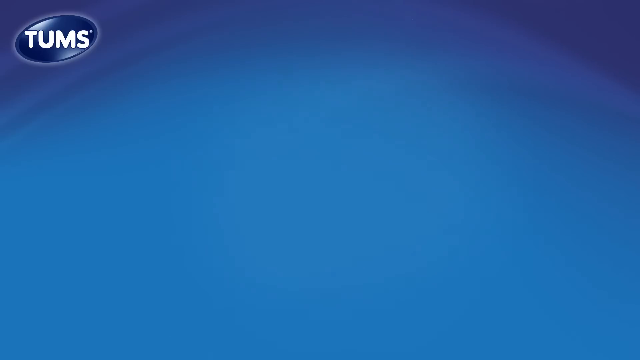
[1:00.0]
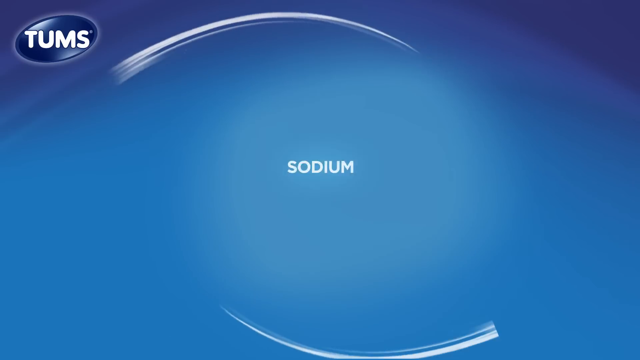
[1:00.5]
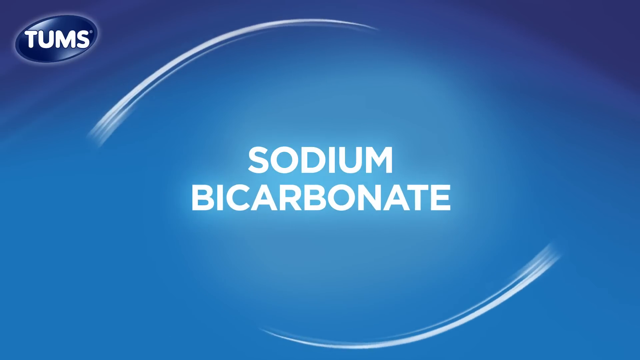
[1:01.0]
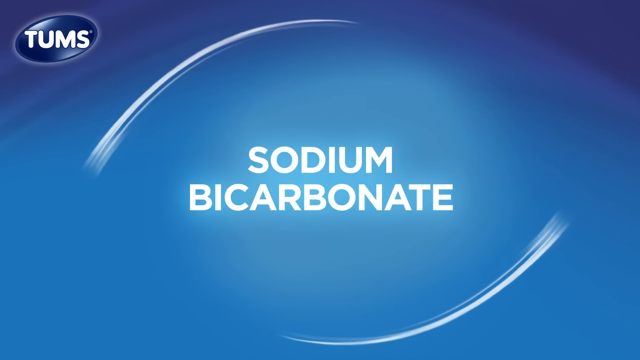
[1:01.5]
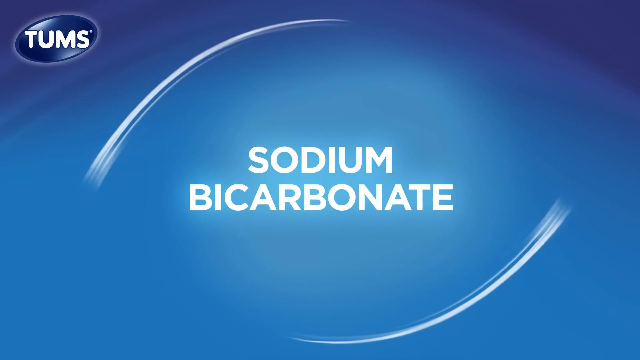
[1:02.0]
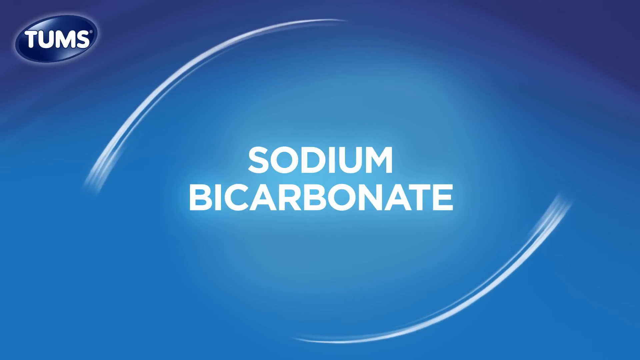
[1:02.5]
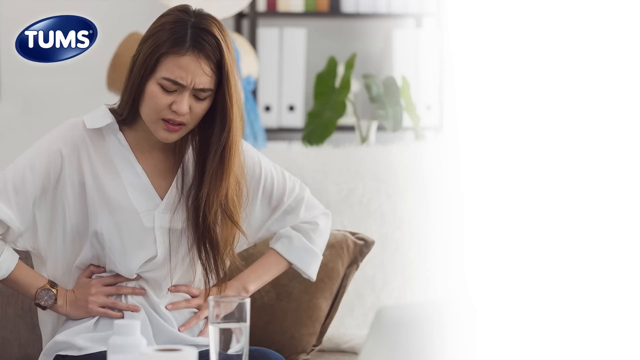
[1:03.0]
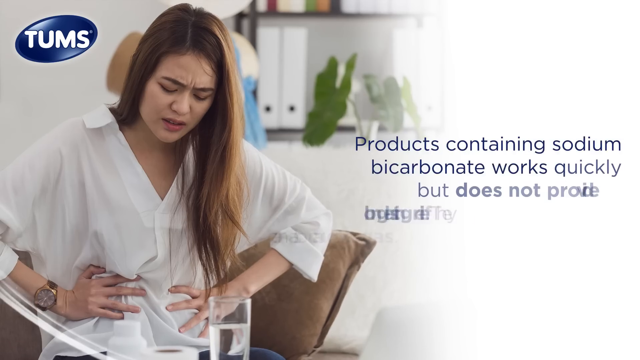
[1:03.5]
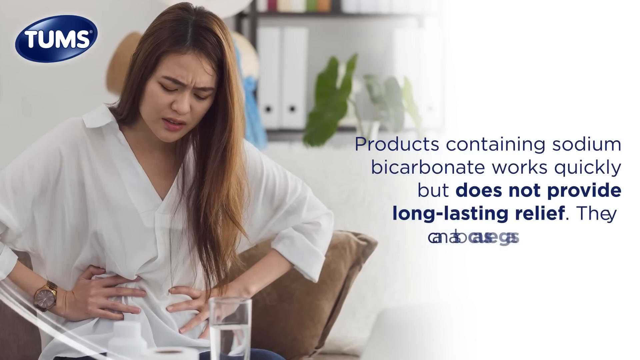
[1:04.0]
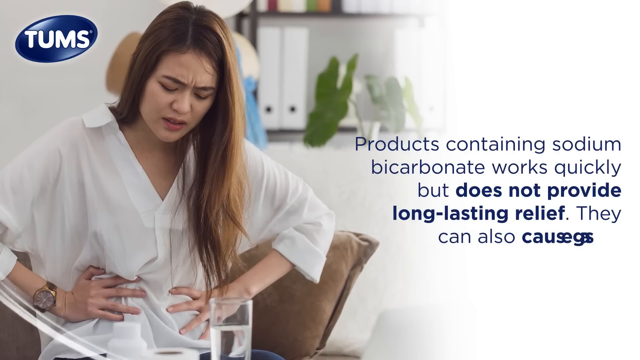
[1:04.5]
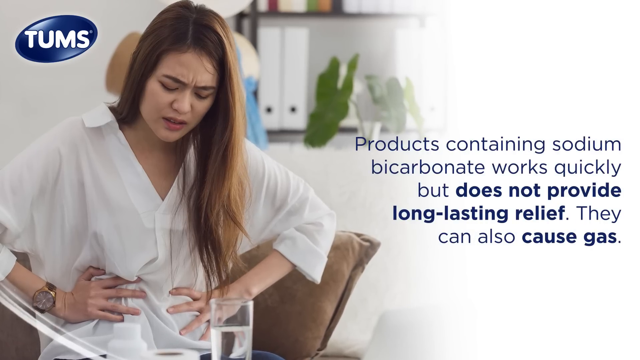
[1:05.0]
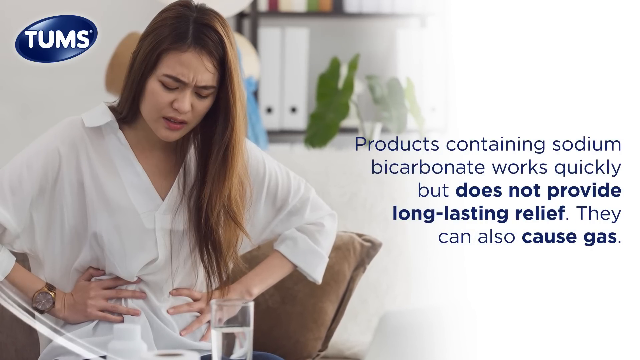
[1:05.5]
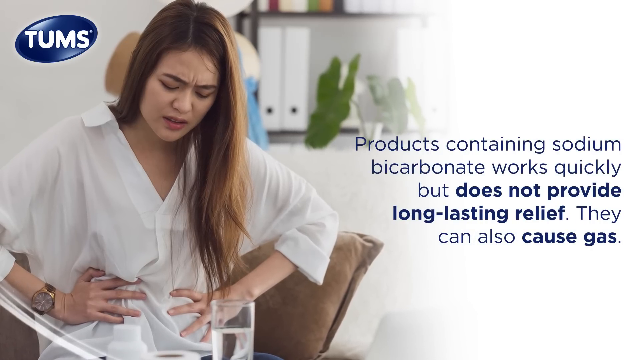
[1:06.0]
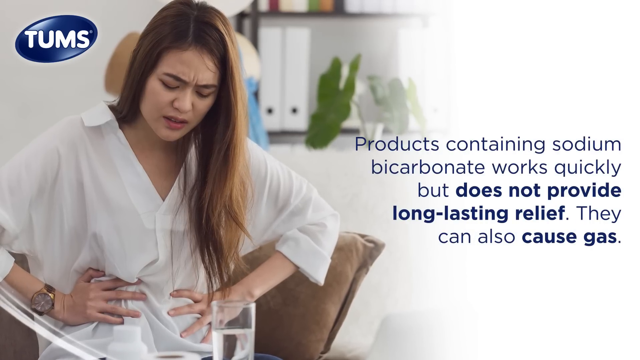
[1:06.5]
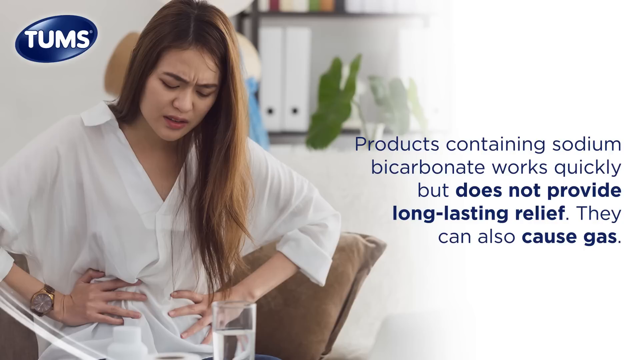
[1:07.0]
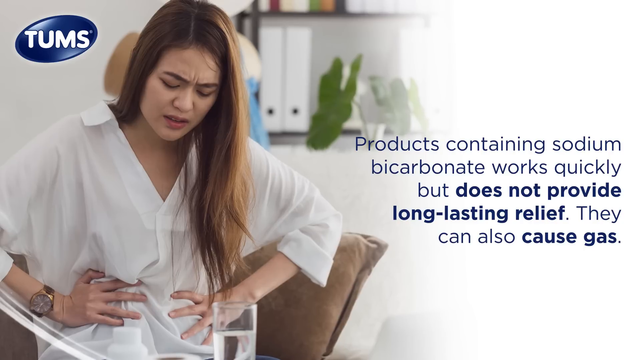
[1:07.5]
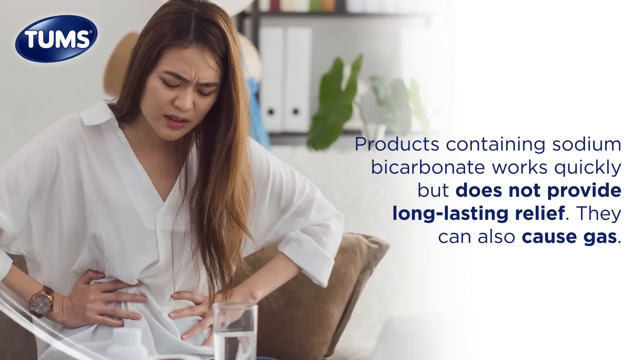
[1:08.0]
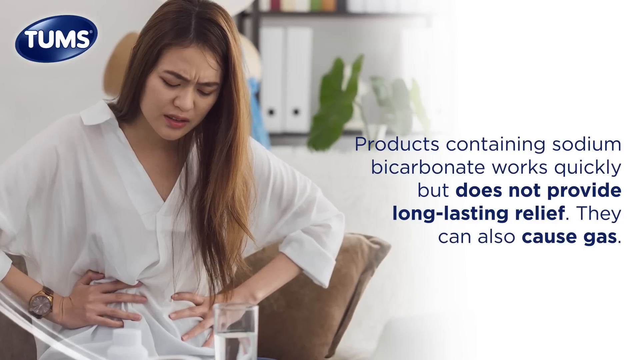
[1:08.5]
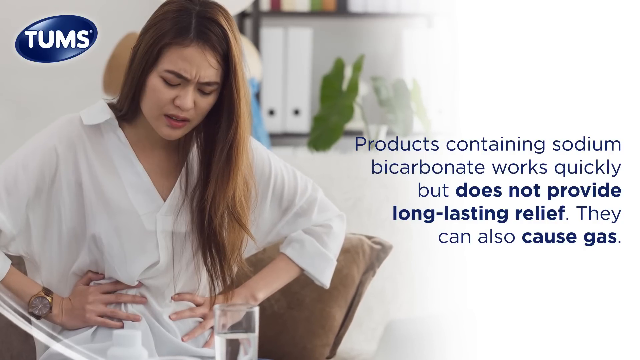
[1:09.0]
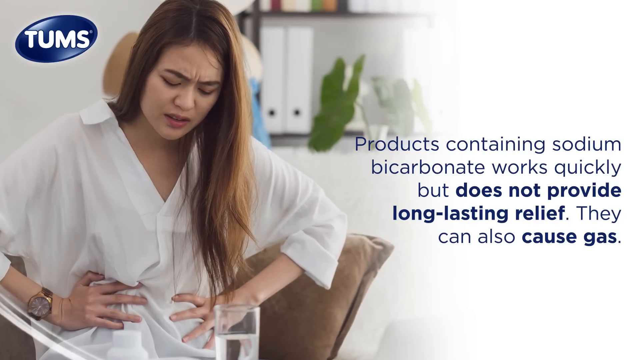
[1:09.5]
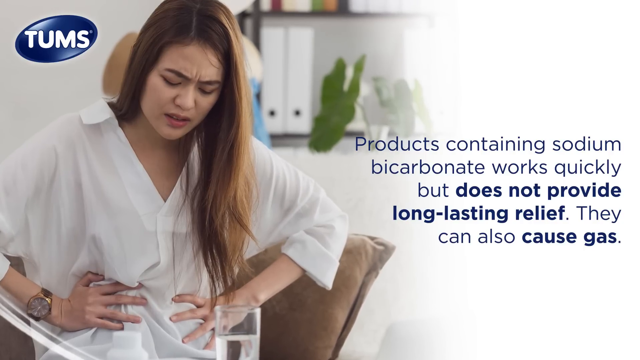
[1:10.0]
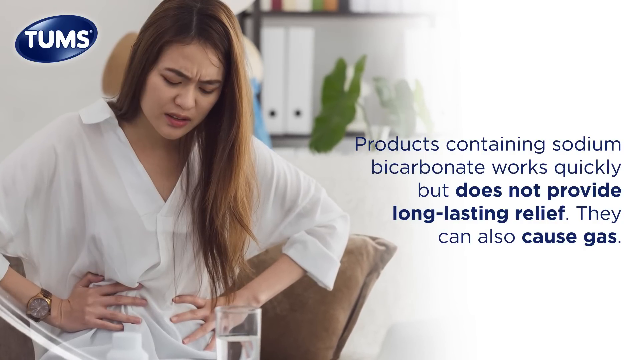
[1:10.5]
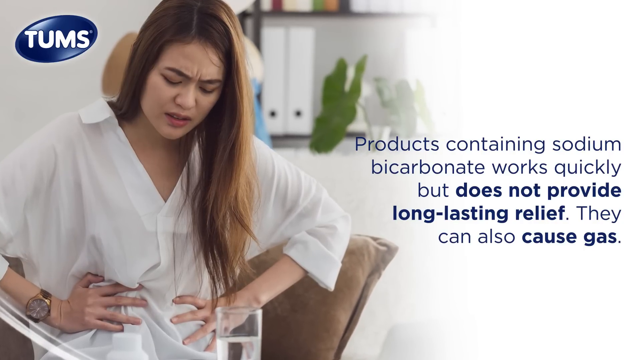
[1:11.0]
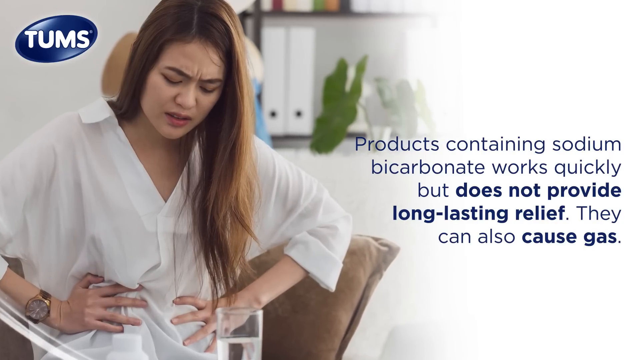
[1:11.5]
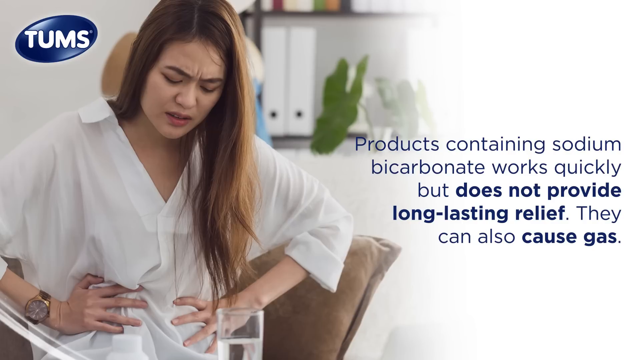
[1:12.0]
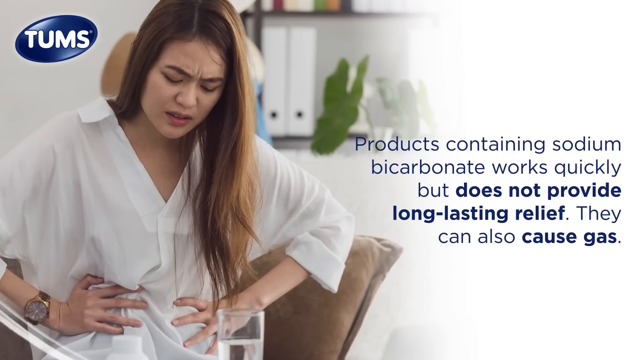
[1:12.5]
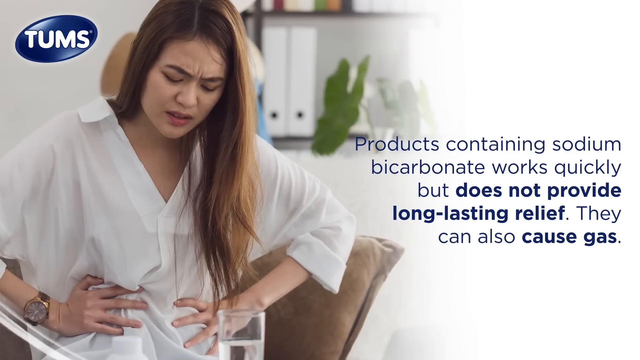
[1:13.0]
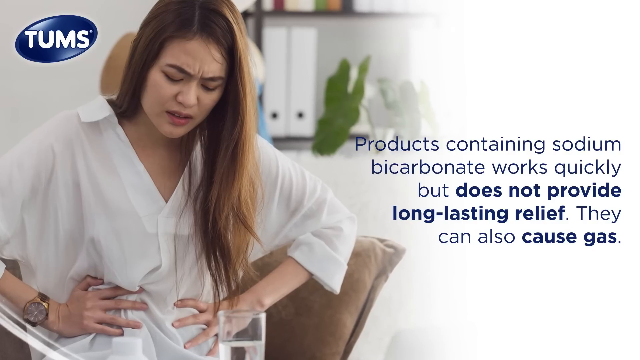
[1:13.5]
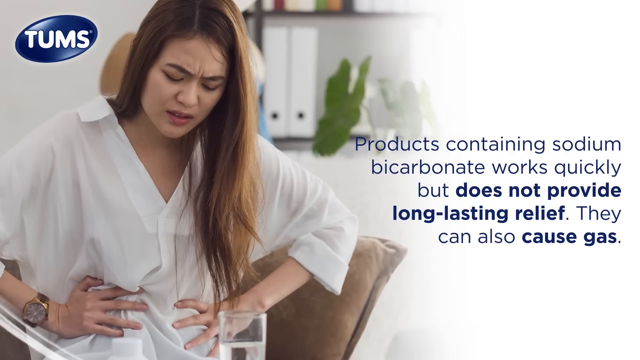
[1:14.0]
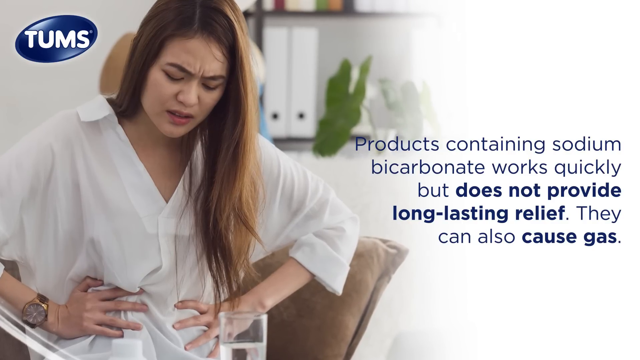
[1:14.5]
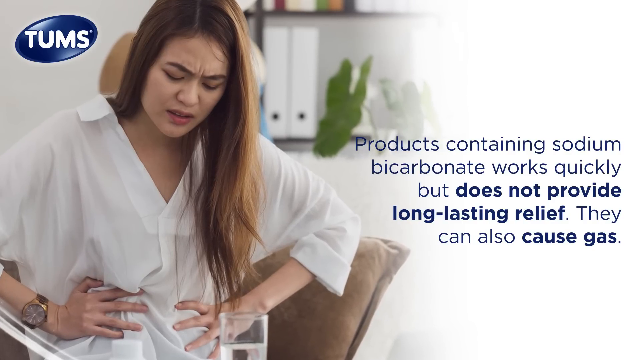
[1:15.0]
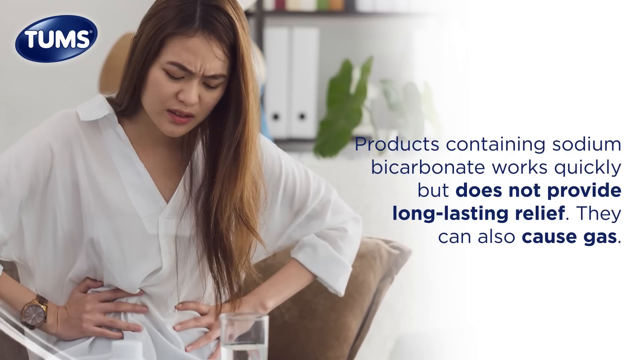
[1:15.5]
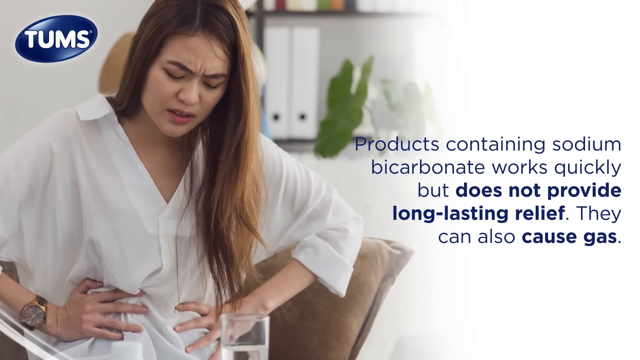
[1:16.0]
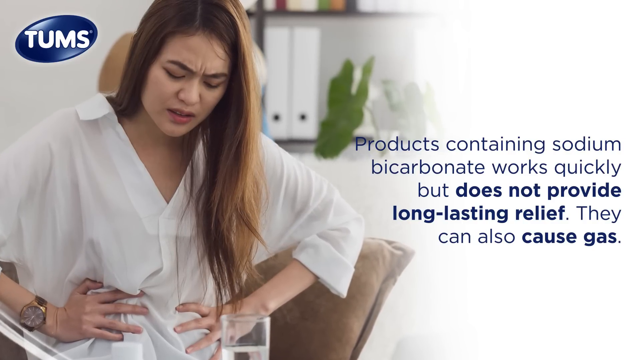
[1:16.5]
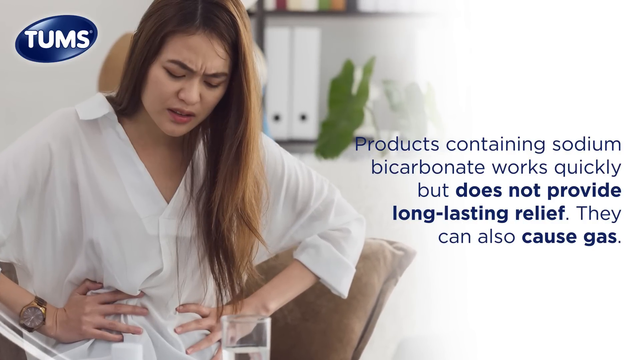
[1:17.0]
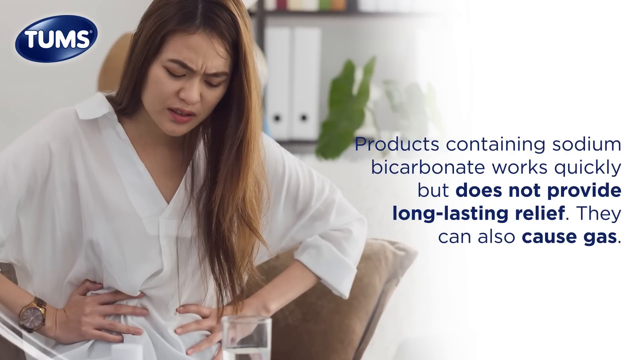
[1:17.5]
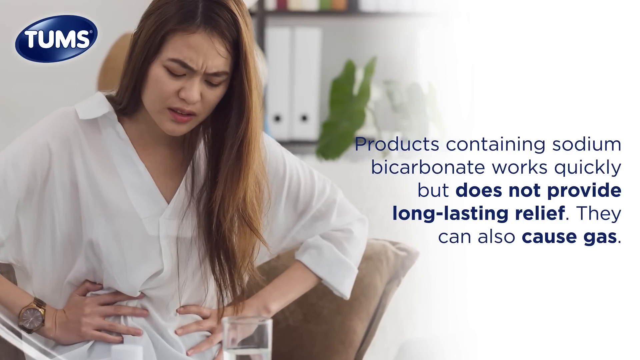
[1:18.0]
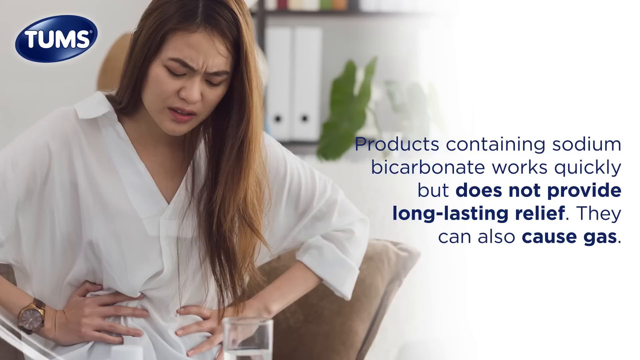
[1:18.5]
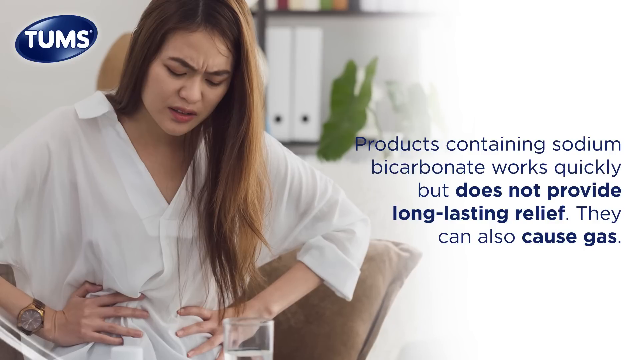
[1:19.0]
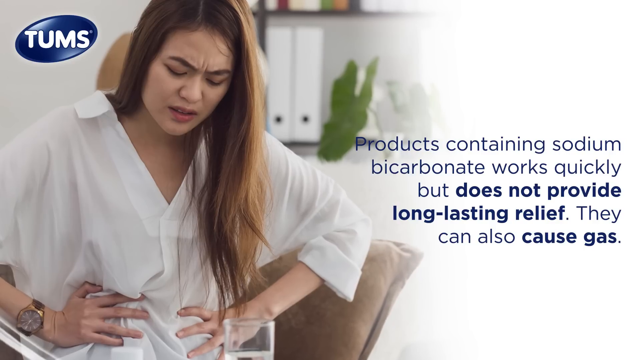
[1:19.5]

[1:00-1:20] White text reading "sodium bicarbonate" pops up on a blue background. Next, against a white background, a woman holds her stomach. She wears a long white shirt that appears to have three-quarter-length sleeves. Royal blue text reads "product containing sodium bicarbonate, work quickly, but does not provide long-lasting relief. They also cause gas," with "does not provide long-lasting relief" and "cause gas" in bold. The picture of the woman zooms in very slowly, with the text on the right. The woman has pretty long hair, about midway down her chest, and she might be Asian. In the back there are some binders, possibly on a shelf, with the leaf of a plant behind them and what look like medicine books on top. The background is very bright and mostly white, so not everything behind her can be made out. The image fades to white.